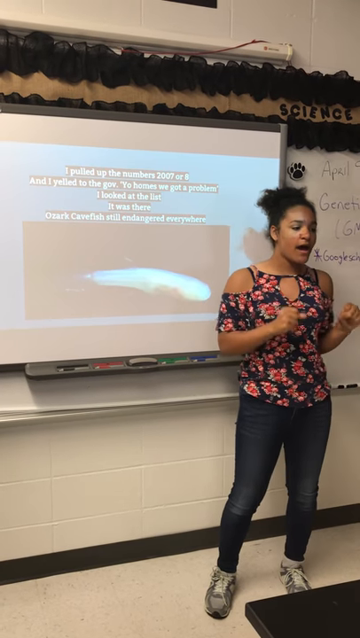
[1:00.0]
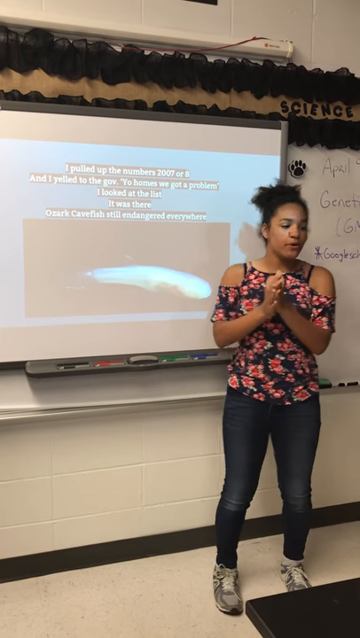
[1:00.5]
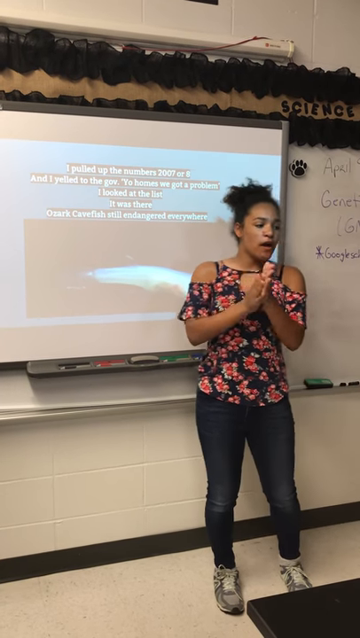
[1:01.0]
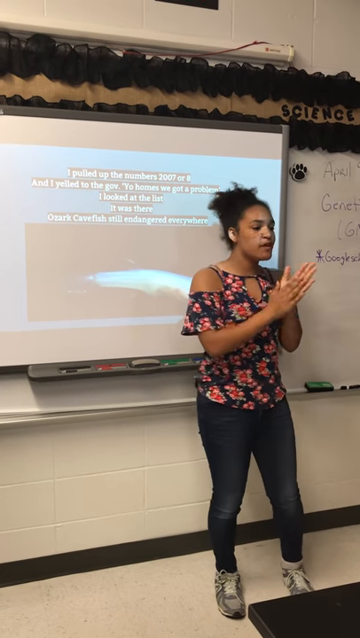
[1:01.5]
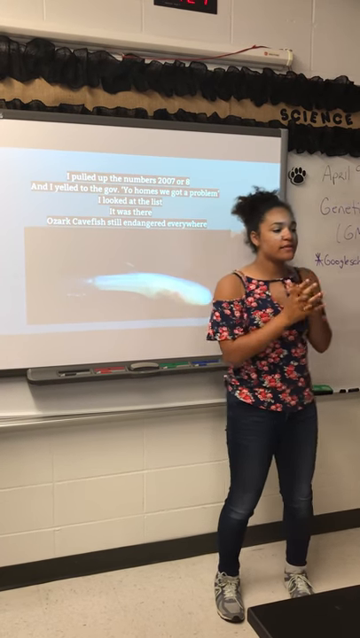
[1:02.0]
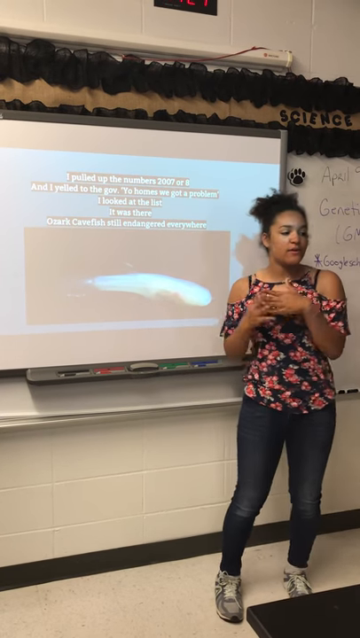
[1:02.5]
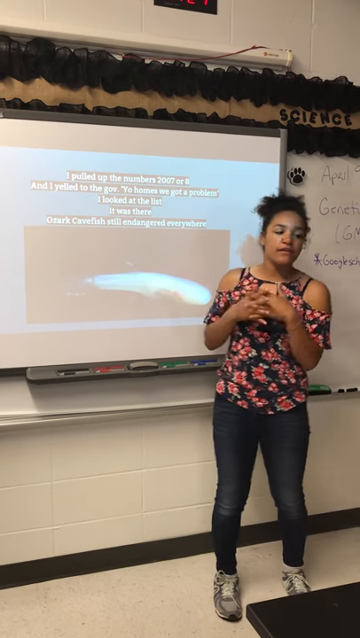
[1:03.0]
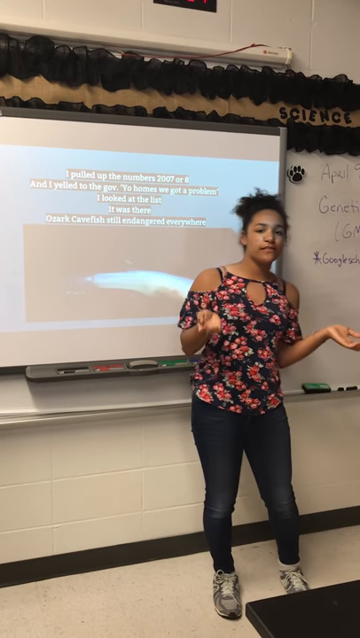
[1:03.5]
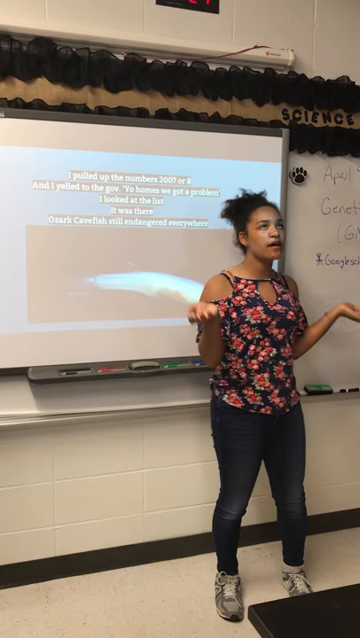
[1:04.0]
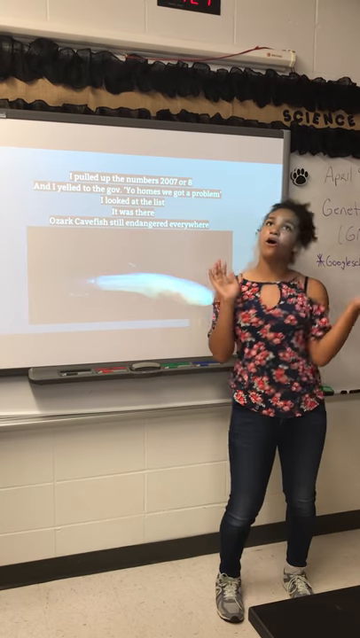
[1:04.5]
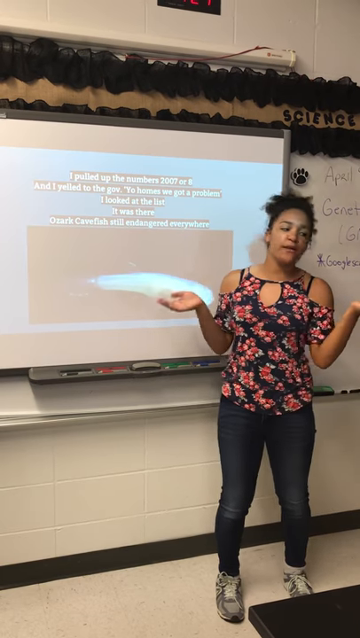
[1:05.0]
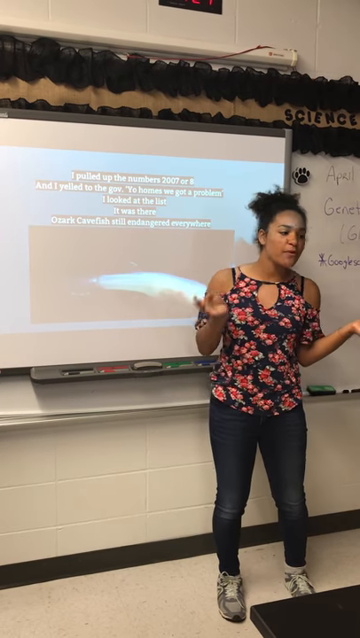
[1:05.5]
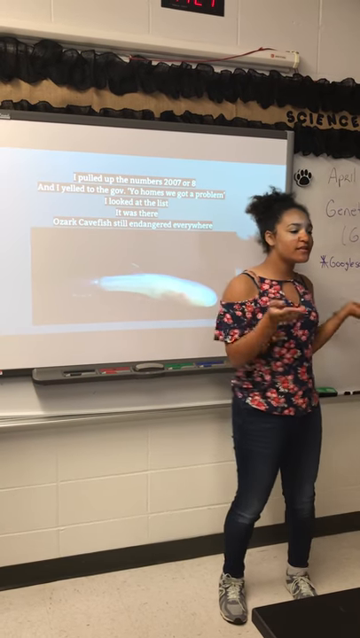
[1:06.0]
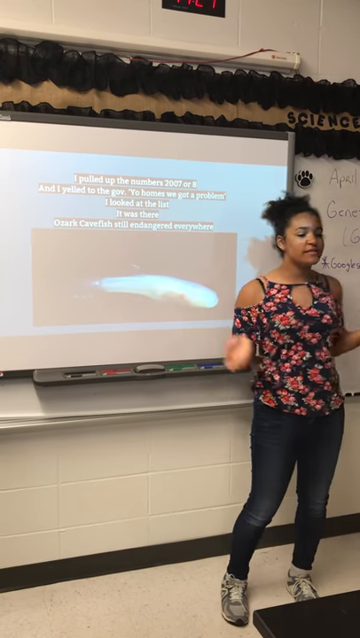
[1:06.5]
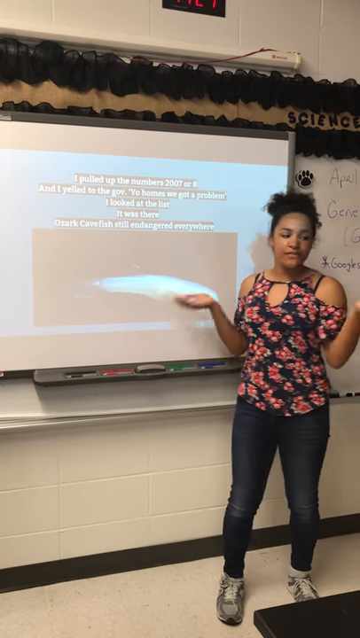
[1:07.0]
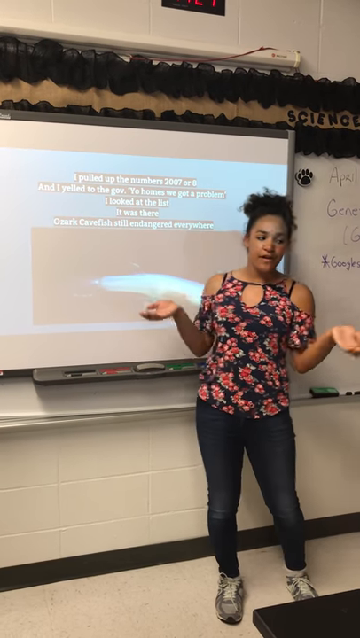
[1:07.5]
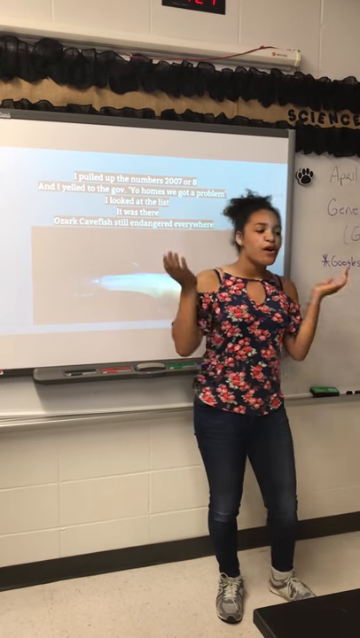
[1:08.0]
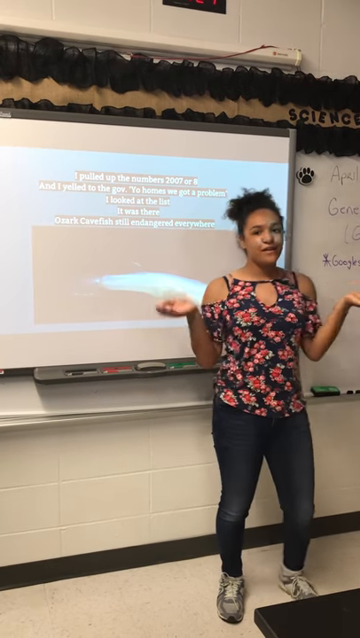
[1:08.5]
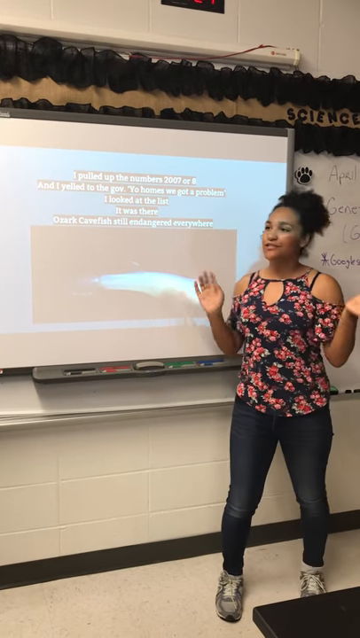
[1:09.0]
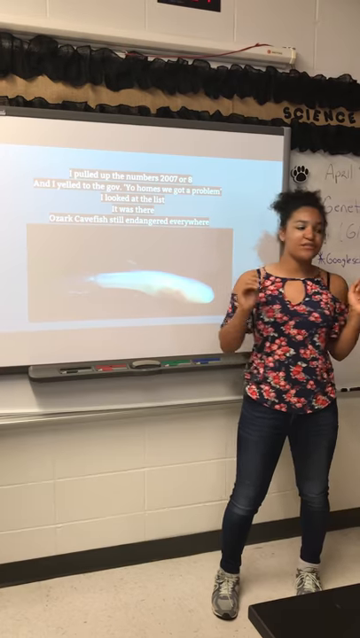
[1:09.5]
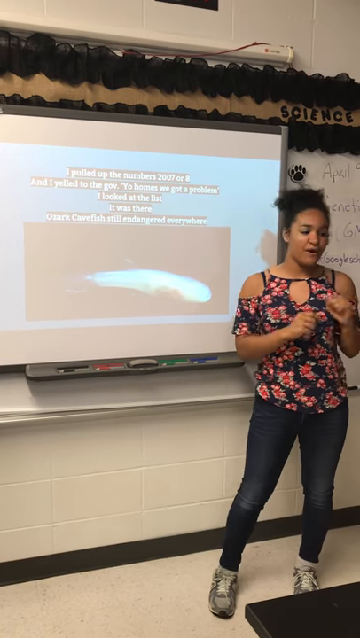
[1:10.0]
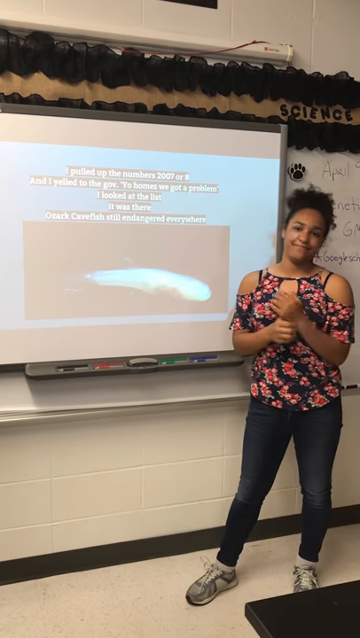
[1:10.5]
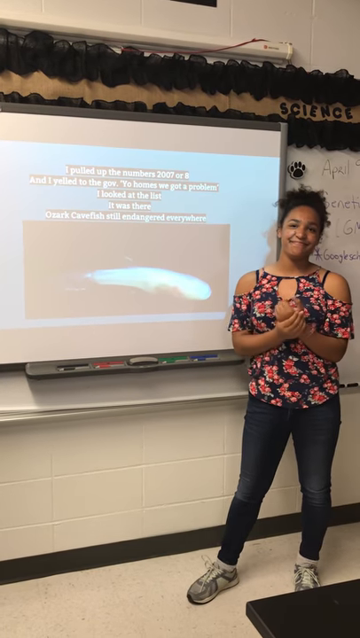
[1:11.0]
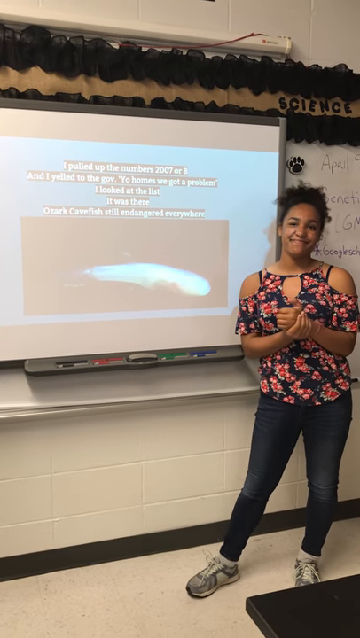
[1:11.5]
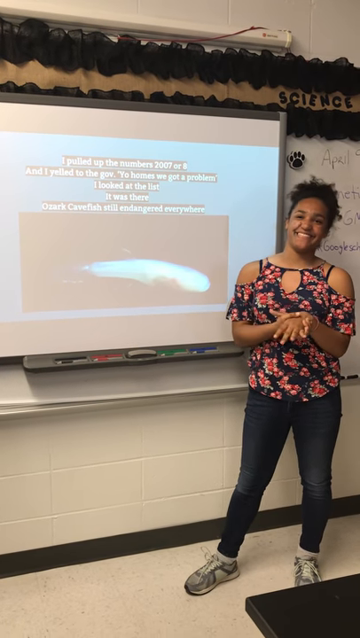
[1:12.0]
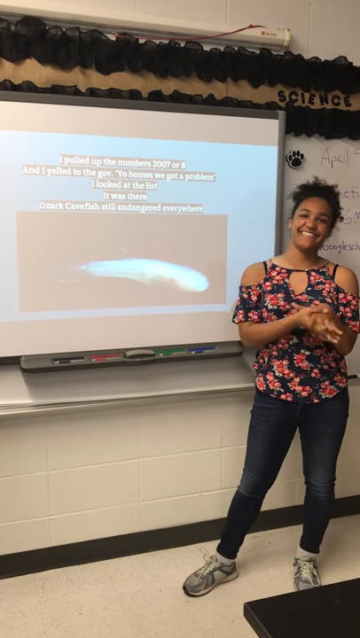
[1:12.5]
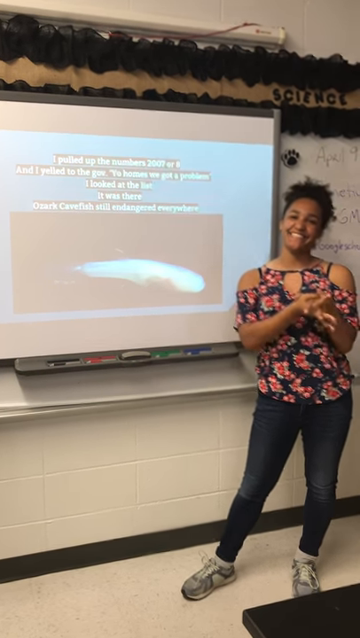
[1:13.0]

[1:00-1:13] The teacher dances, moving her arms around and singing the song. The projector screen shows some kind of cave fish, endangered everywhere else. The setting is still the same classroom, with the teacher of African descent in a flower shirt, jeans, and sneakers. She seems to be teaching biology, as everything shown on the projector has been some kind of marine life or land animal, and the screen still says "GMOs".